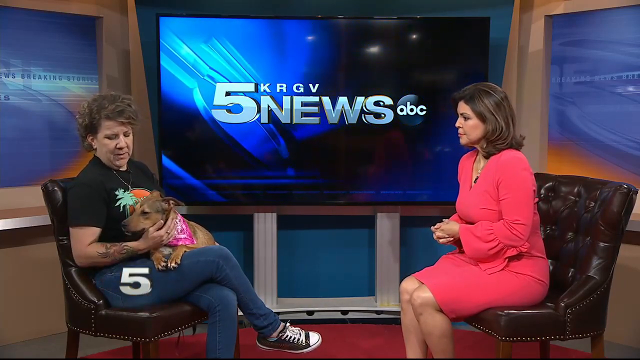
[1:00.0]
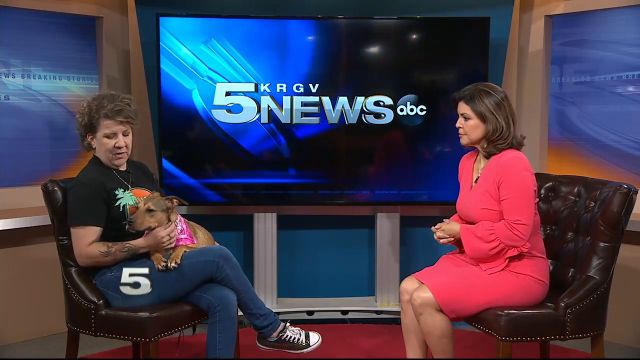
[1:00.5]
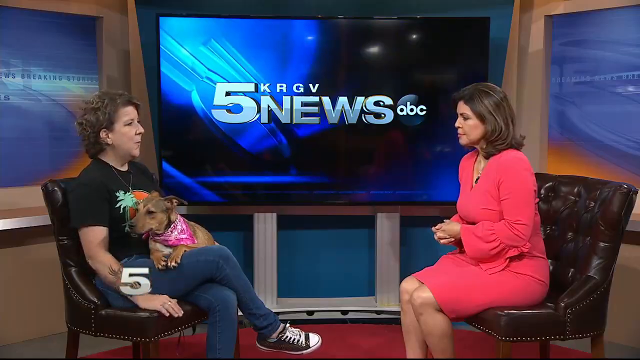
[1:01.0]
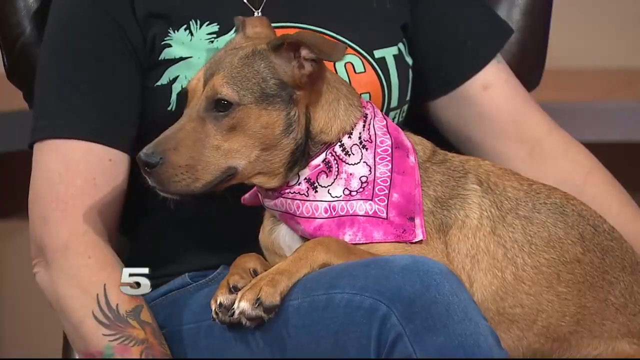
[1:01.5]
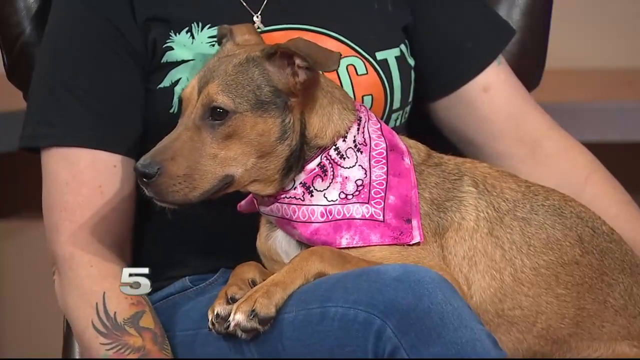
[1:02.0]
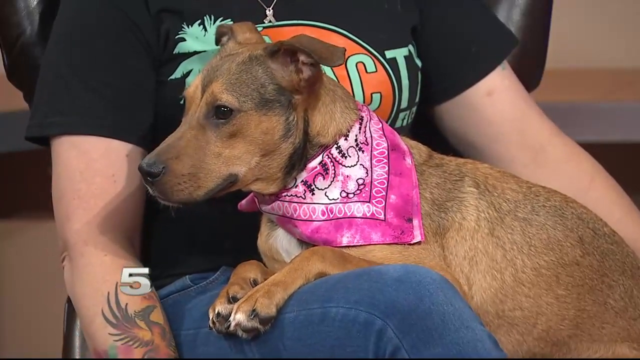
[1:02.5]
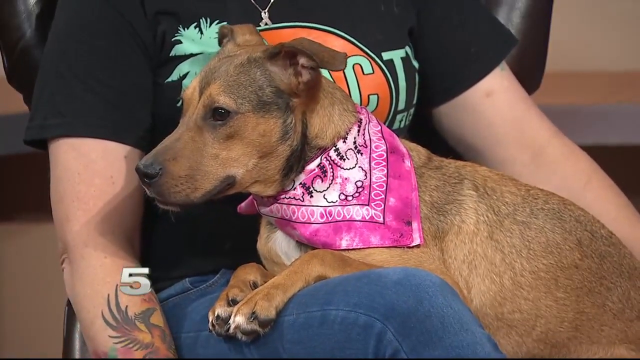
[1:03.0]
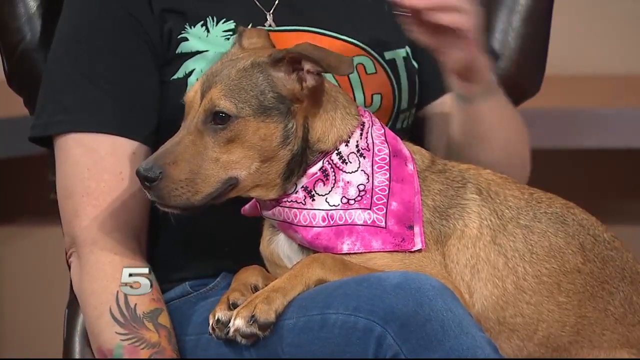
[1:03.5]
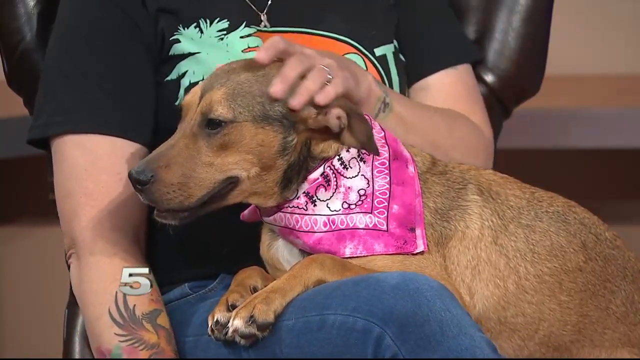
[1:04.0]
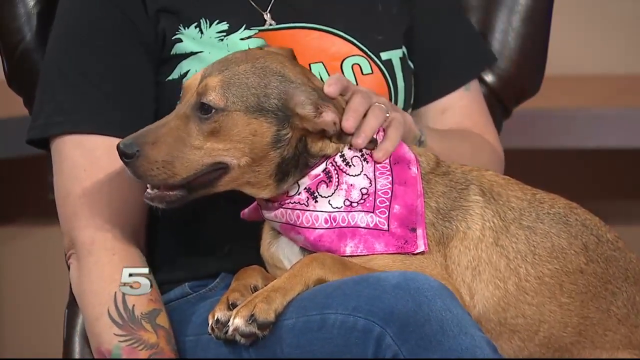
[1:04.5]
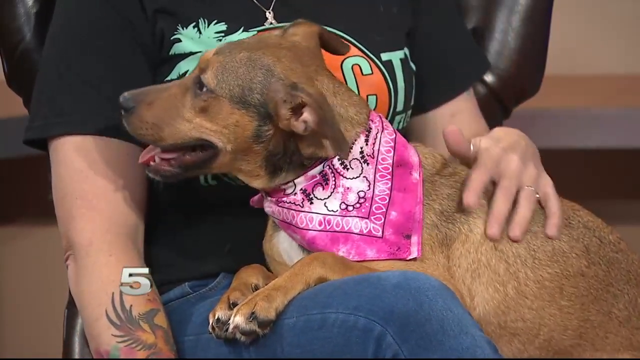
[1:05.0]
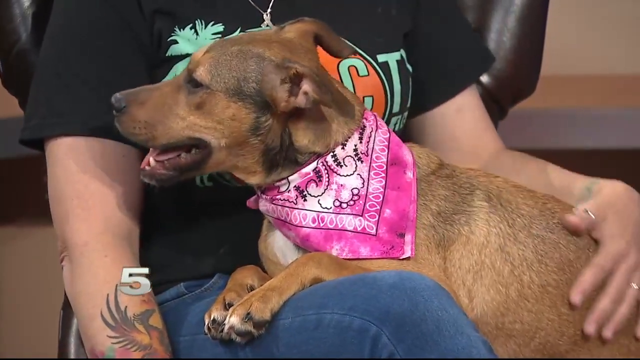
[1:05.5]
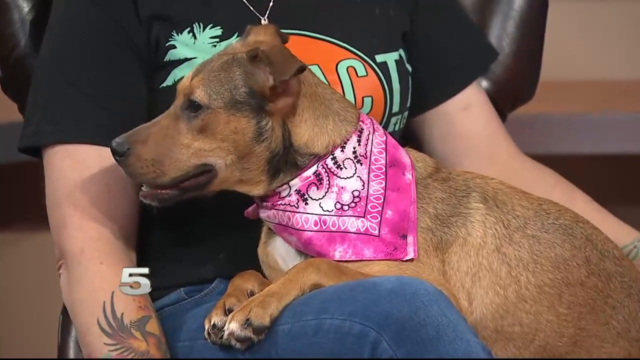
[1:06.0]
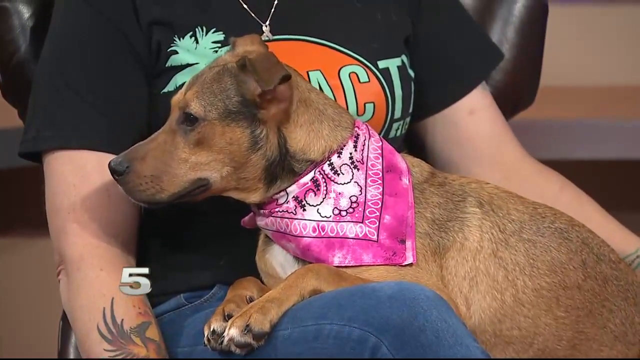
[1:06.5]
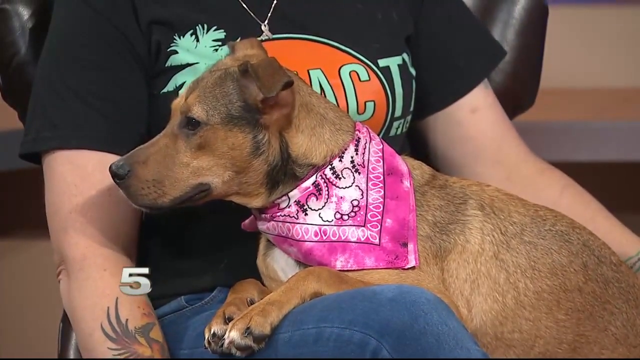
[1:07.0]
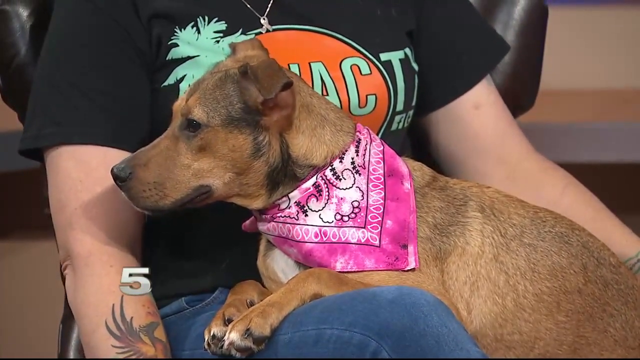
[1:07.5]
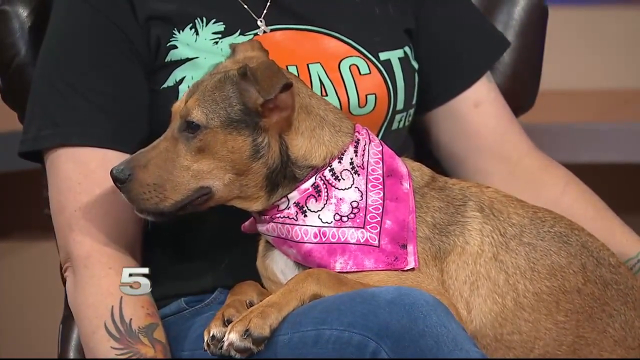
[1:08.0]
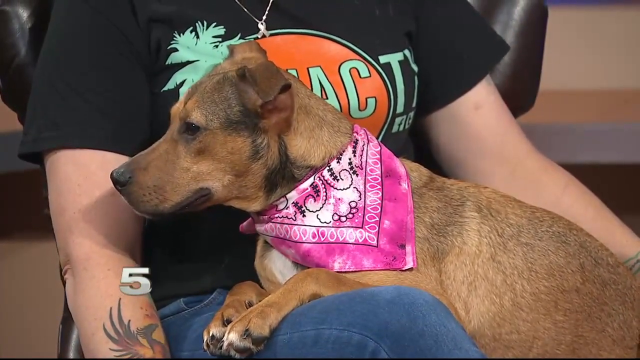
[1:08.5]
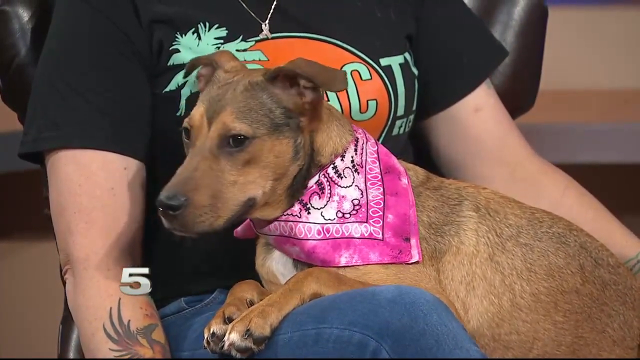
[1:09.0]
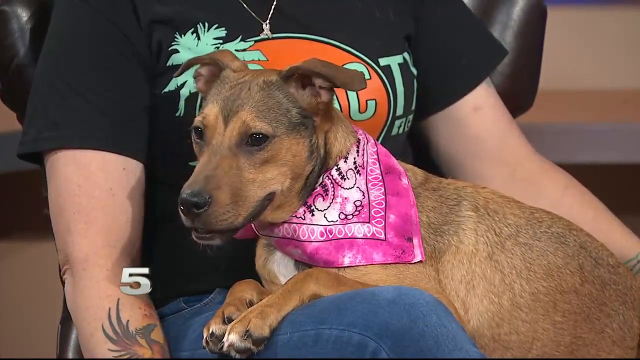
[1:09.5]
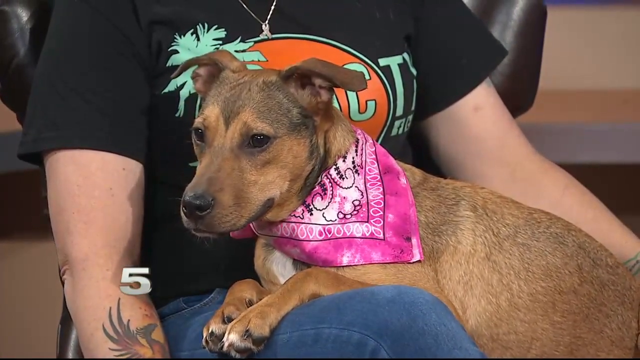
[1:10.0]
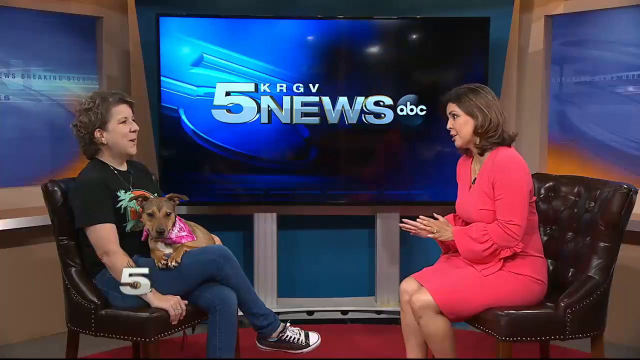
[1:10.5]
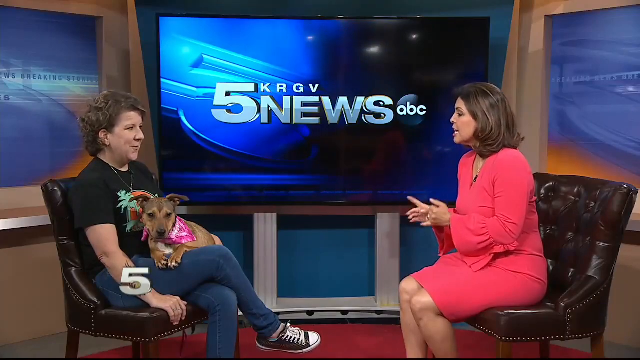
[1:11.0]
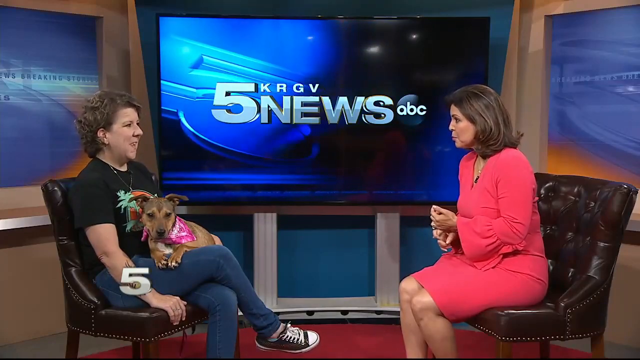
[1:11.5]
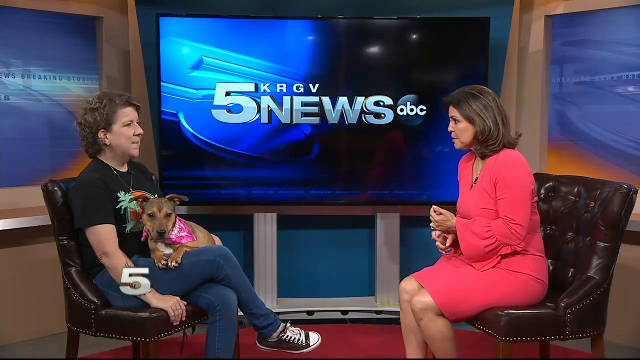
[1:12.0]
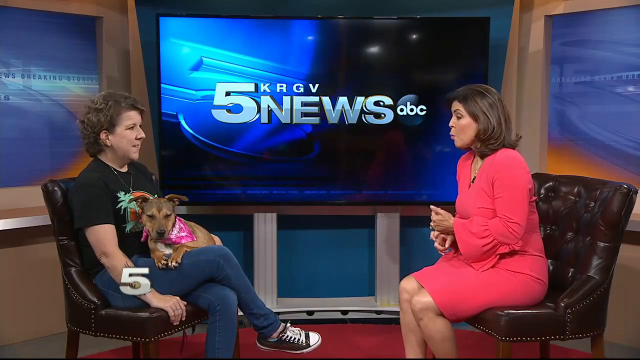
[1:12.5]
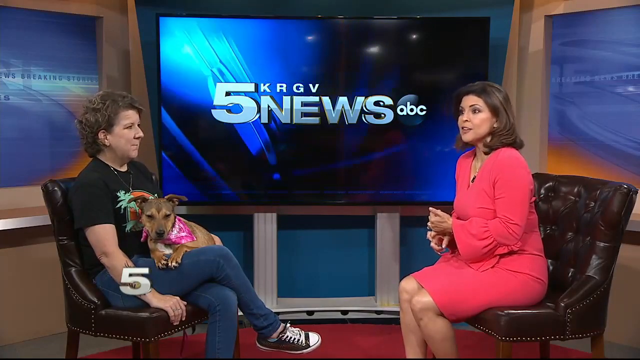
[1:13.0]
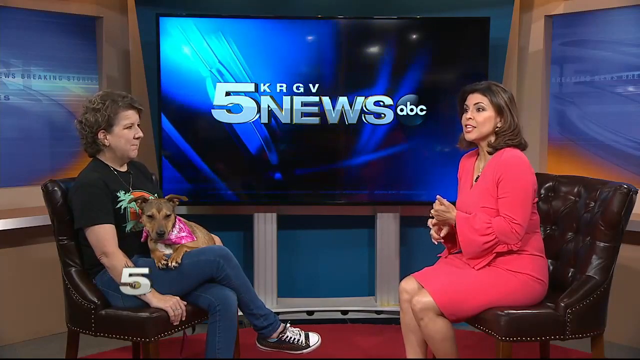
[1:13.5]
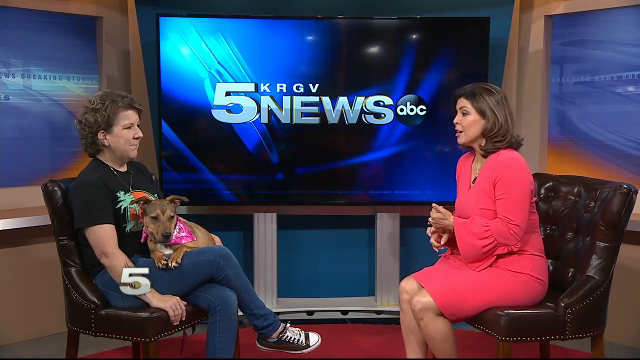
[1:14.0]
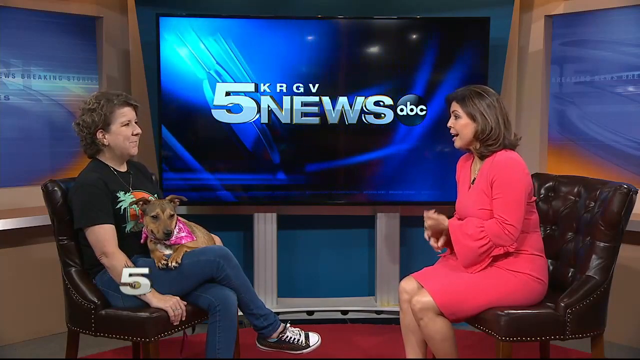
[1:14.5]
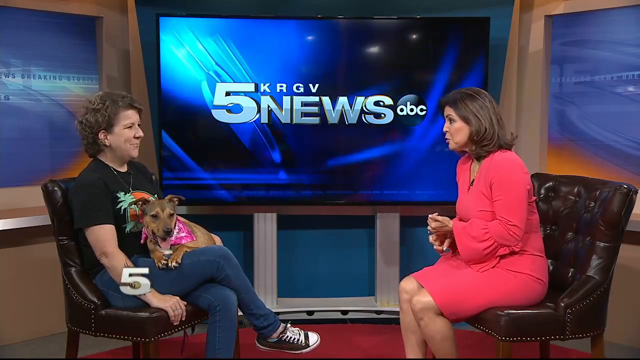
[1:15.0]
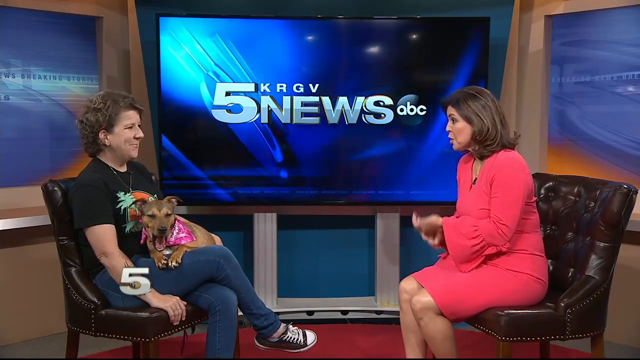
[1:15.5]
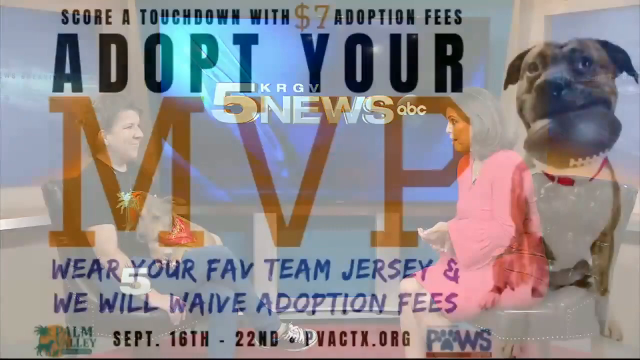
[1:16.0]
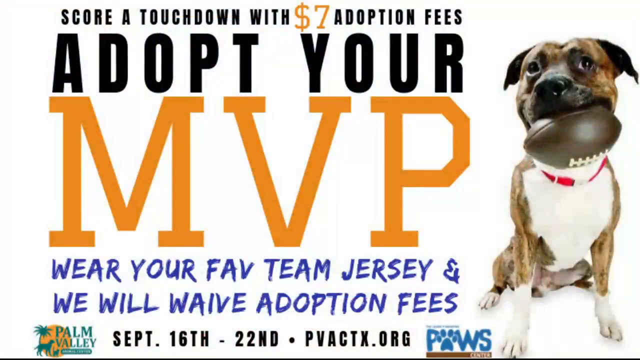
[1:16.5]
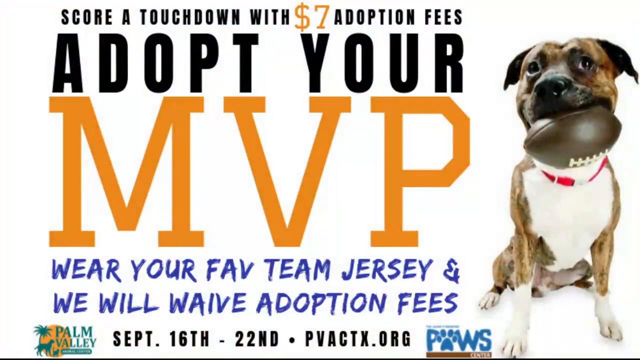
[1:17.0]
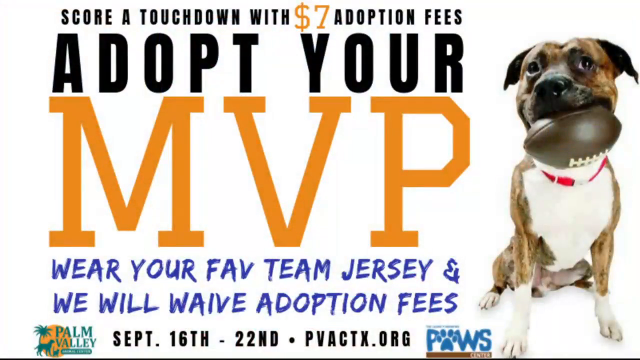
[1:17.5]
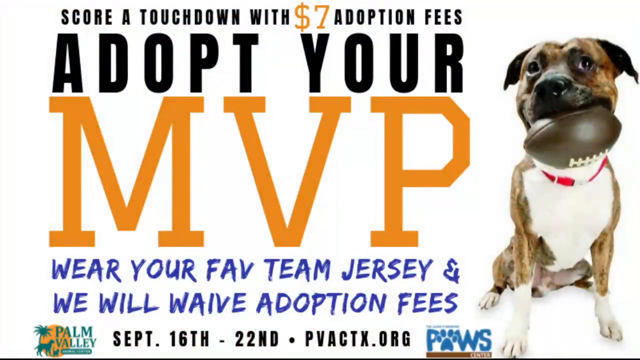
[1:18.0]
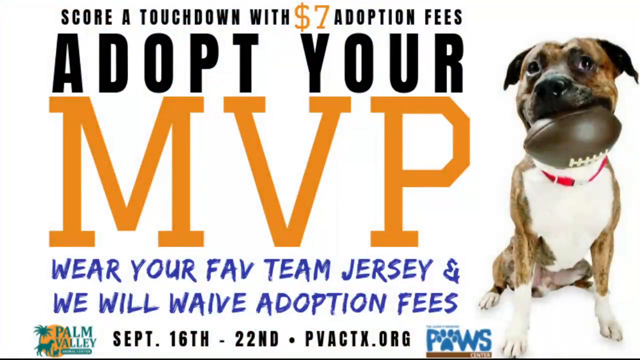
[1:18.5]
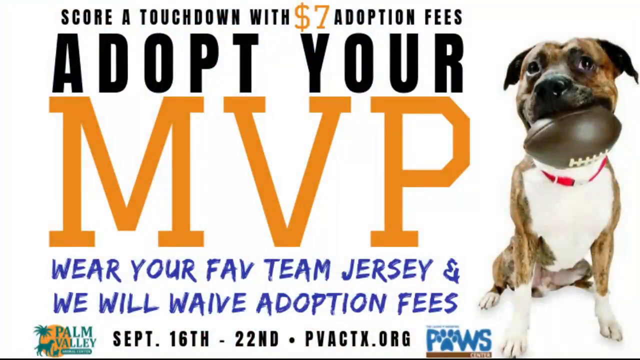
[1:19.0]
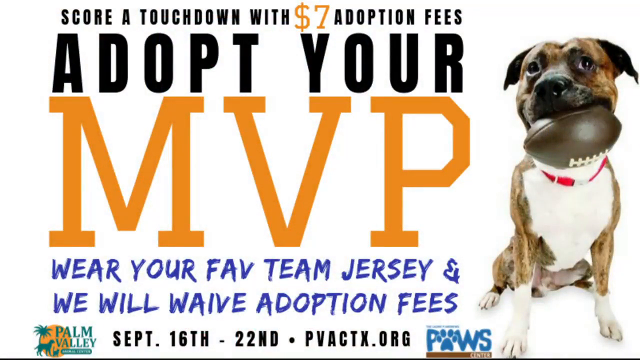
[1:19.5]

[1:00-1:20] The dog seems to be resting on the owner's lap as the owner pets its head and ears with her left hand, then slowly strokes back along its spine down to the tail. The dog is calm and relaxed, looking back and forth between the owner and the audience, while the news anchor and the owner look each other in the eyes as they talk. Suddenly the screen transitions to an ad about adopting a dog for only $7, showing the time, the location, and what can be used to adopt the dog.